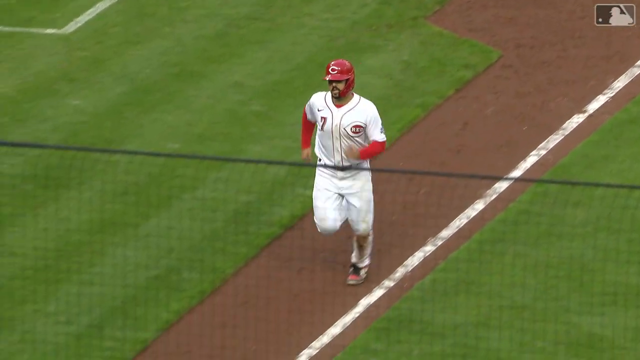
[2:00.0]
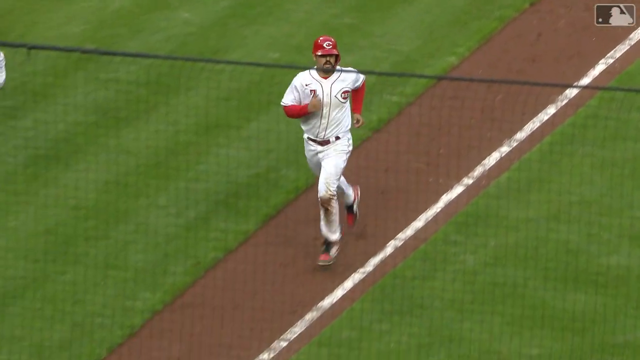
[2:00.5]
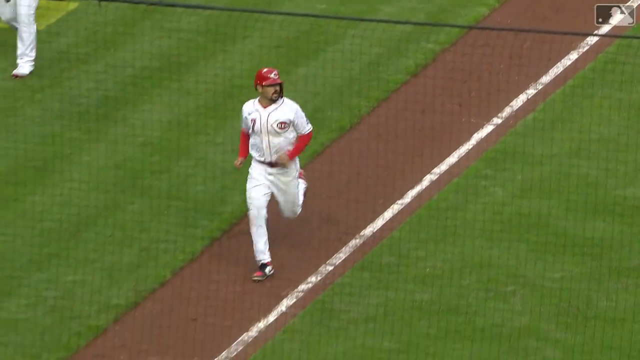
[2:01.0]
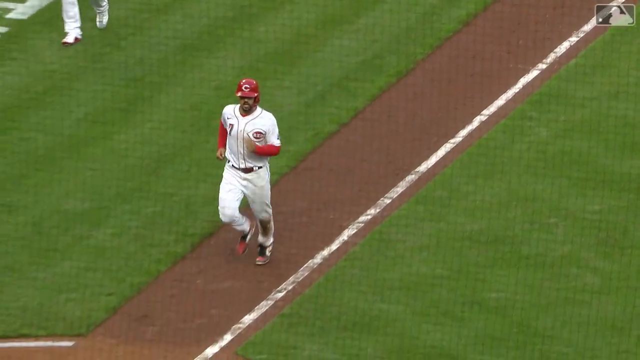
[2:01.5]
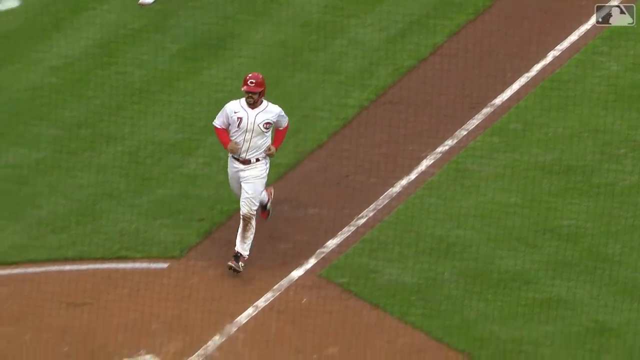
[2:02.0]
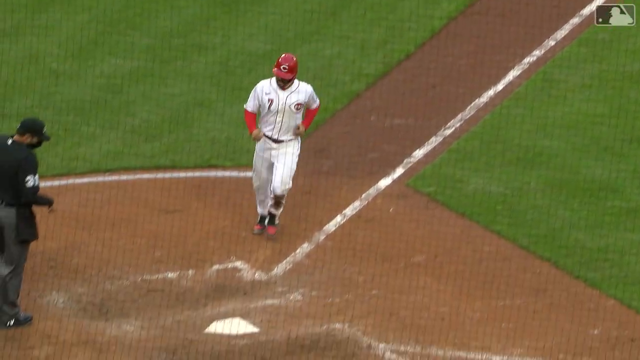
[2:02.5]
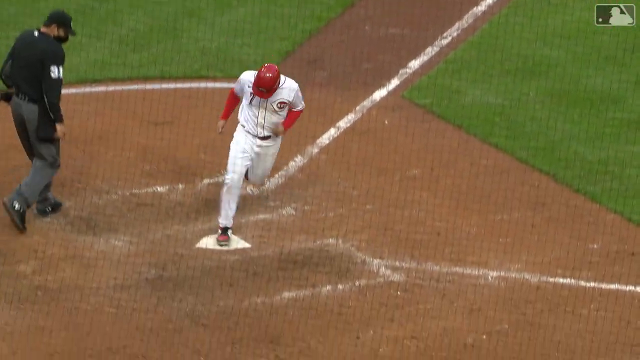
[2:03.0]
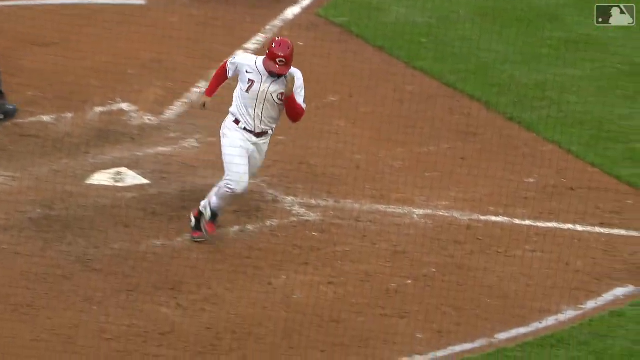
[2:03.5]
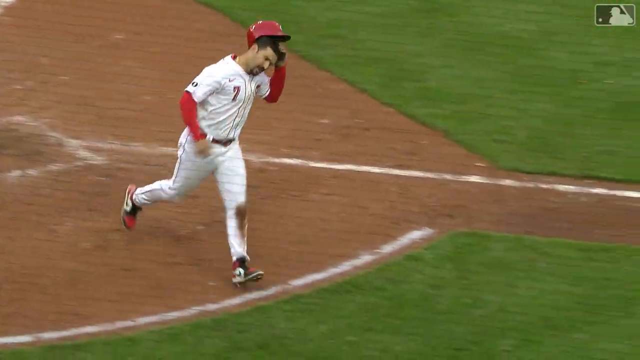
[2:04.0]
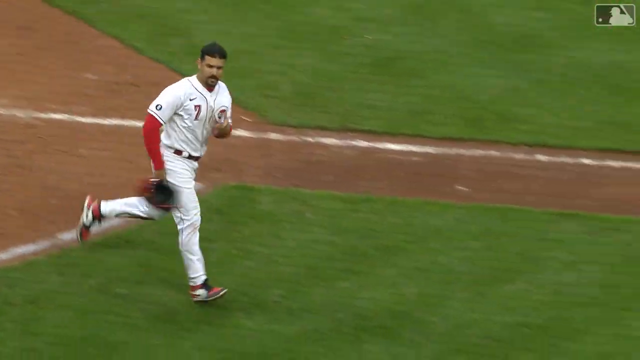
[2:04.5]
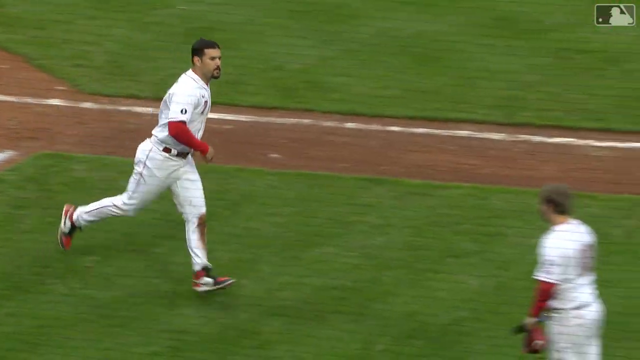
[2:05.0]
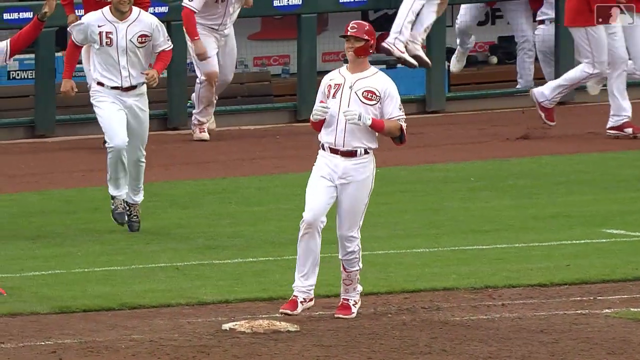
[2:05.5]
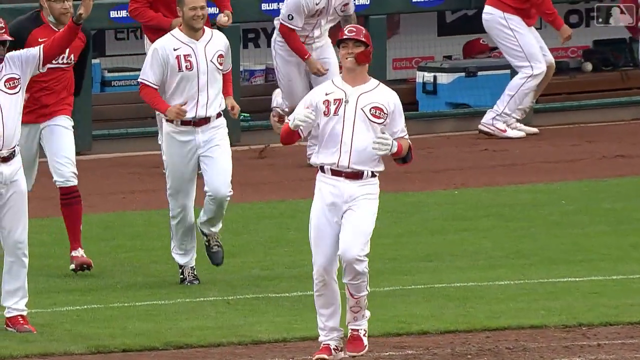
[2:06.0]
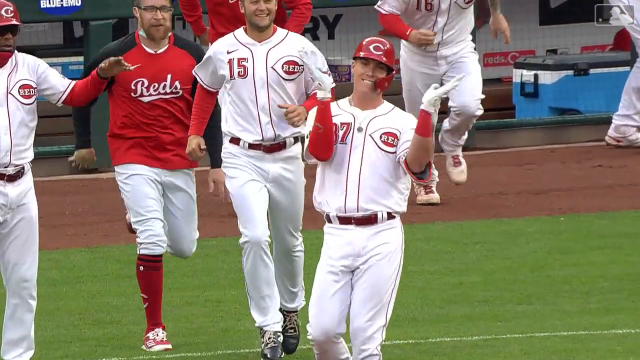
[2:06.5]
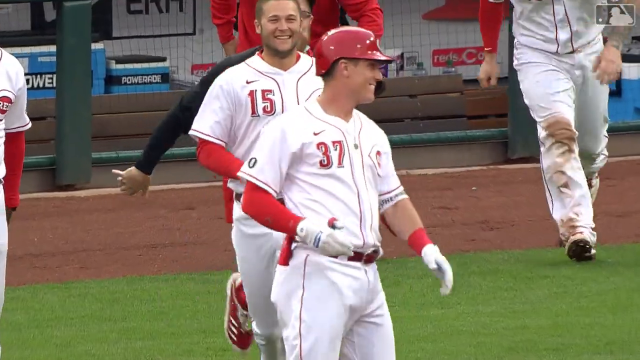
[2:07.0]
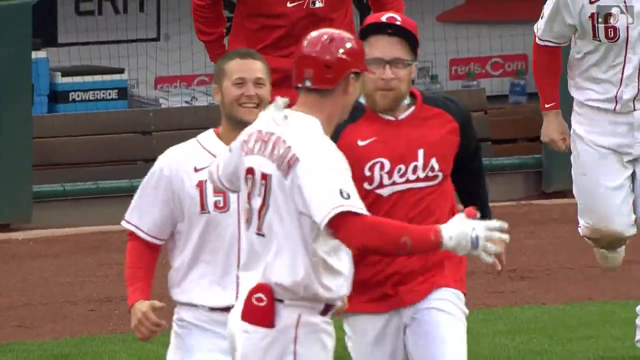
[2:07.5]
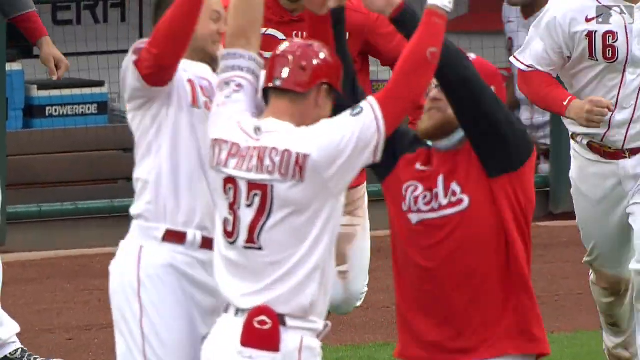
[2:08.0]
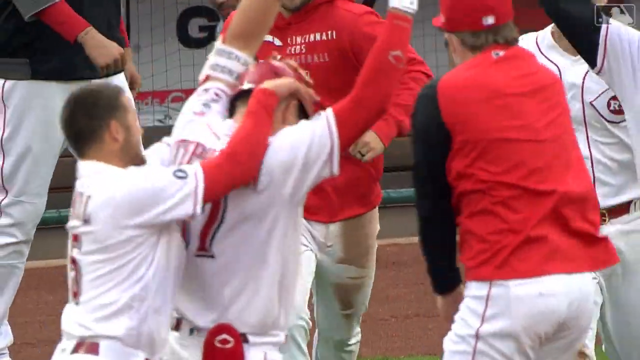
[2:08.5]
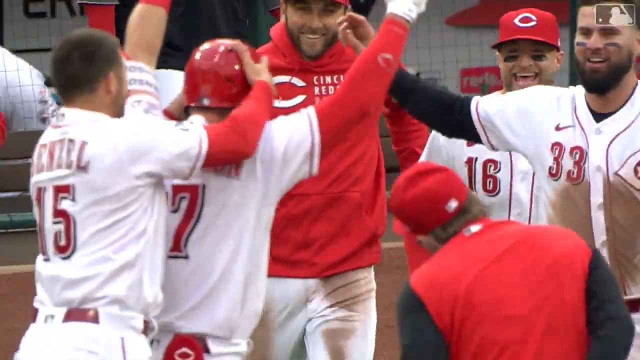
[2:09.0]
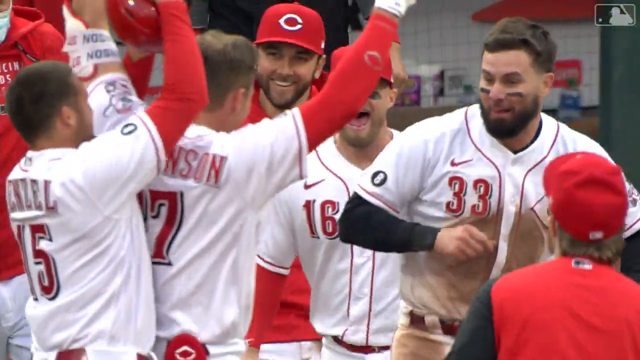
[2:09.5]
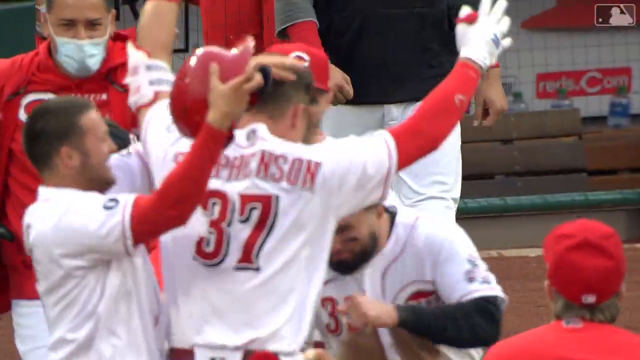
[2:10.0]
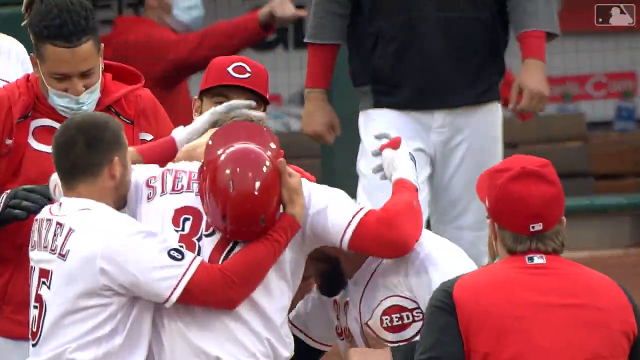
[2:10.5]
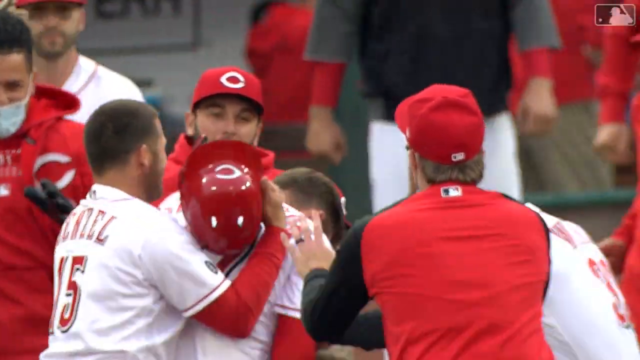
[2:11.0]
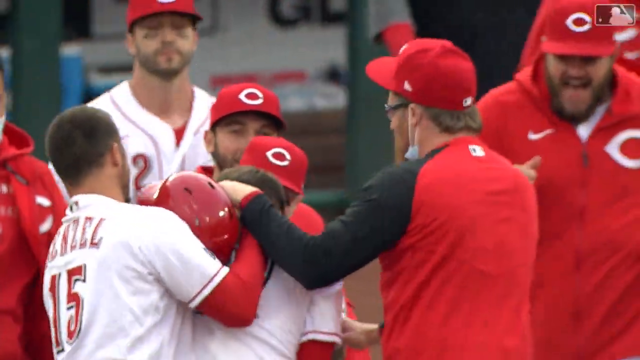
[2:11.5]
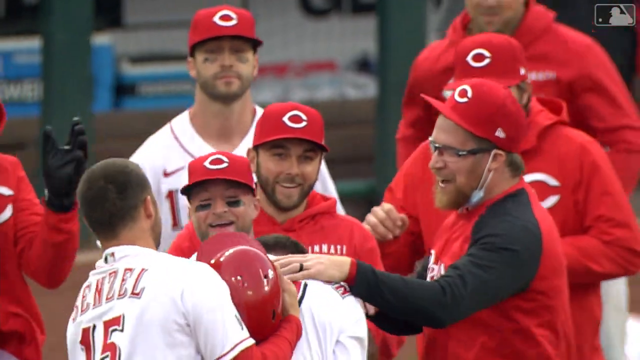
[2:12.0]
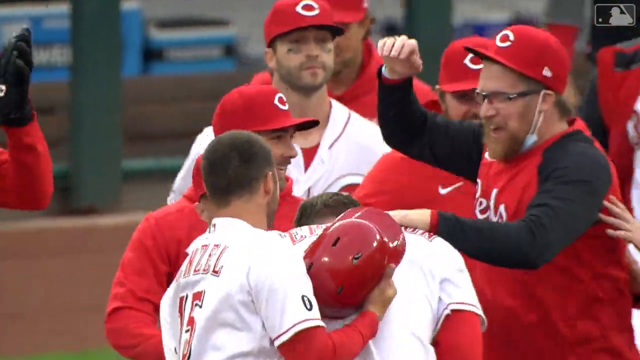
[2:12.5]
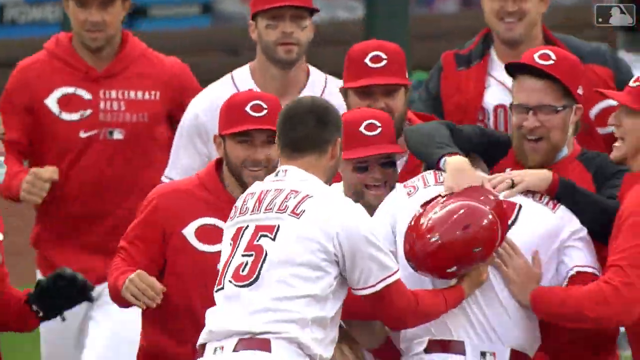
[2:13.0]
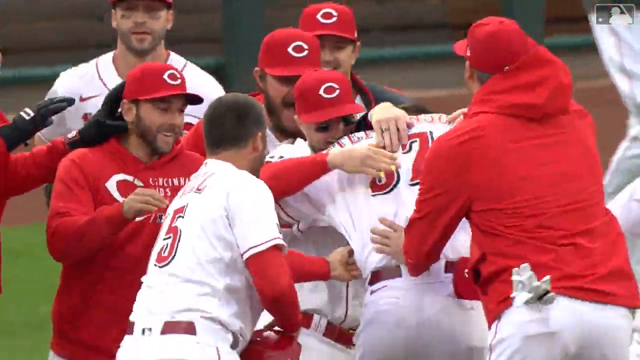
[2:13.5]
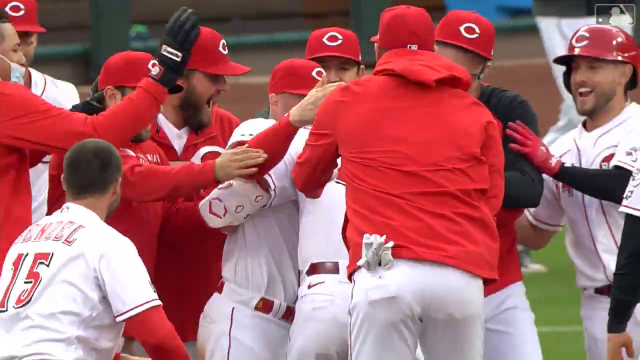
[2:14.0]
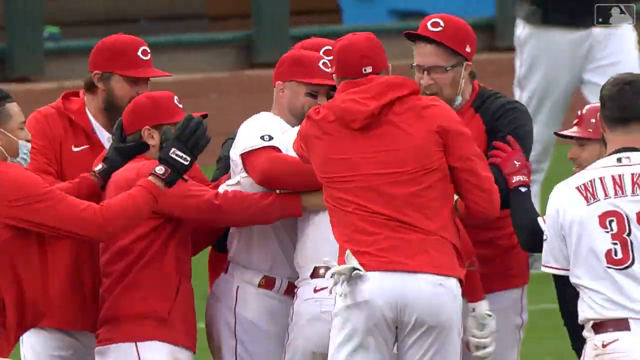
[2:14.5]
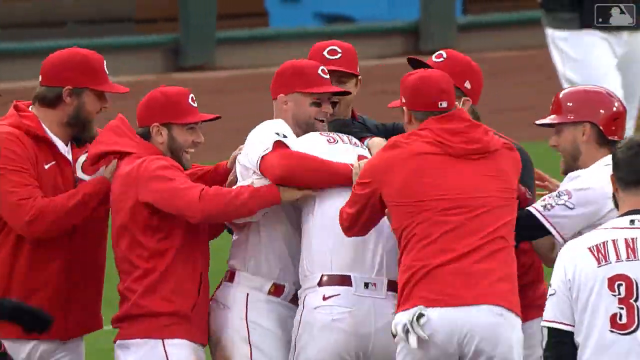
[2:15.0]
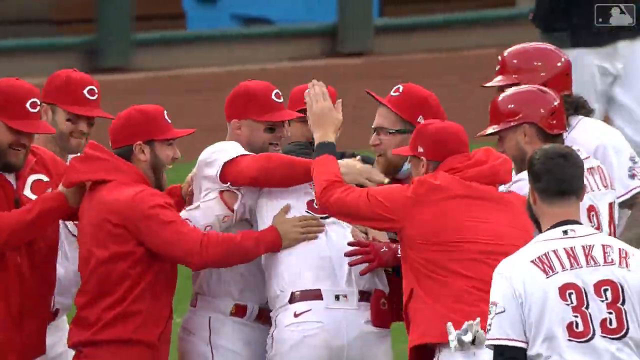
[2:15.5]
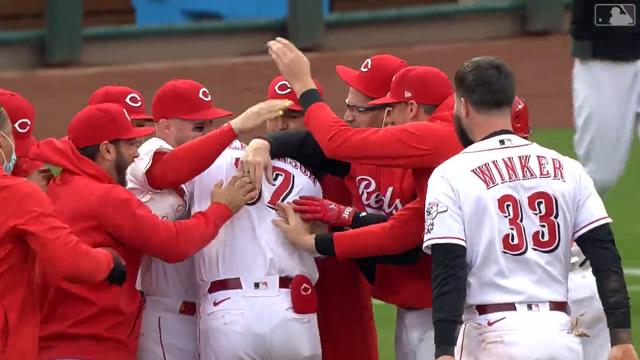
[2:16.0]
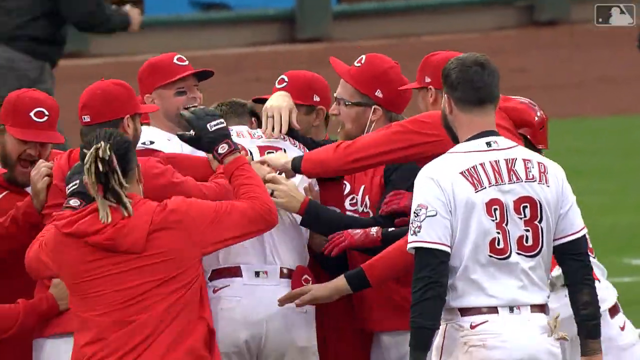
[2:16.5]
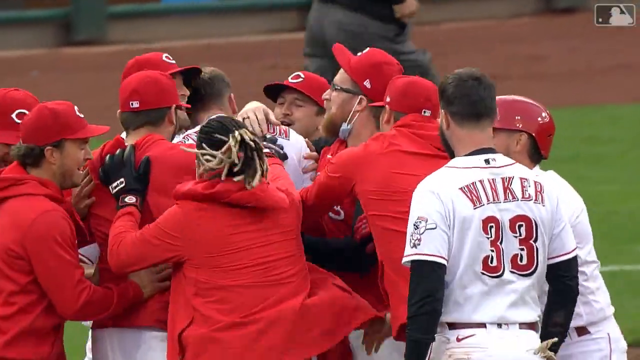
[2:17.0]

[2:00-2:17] Number 7 runs along the field, jogging pretty slowly and seemingly taking their time. Again, the players are shown congratulating number 37 for winning the game for the team. Number 37 smiles and exchanges high fives and pleasantries with teammates and coaches. One of the players takes off his helmet while being celebrated by his team and coaches. Again, the MLB logo appears in the top right of the screen. The player who was leisurely running around the bases throws his hat off after scoring. Number 37 claps and enjoys the win with teammates. Behind the celebrating players there appears to be a soft-sided cooler, blue with a black handle.